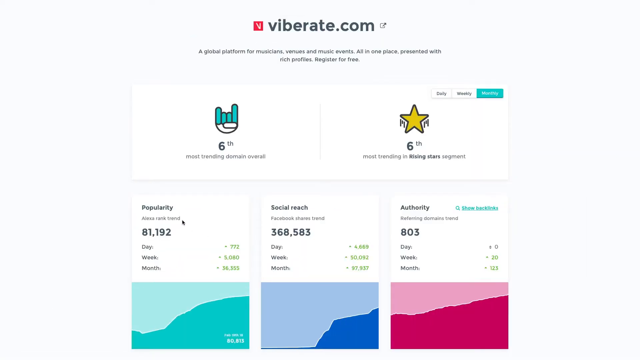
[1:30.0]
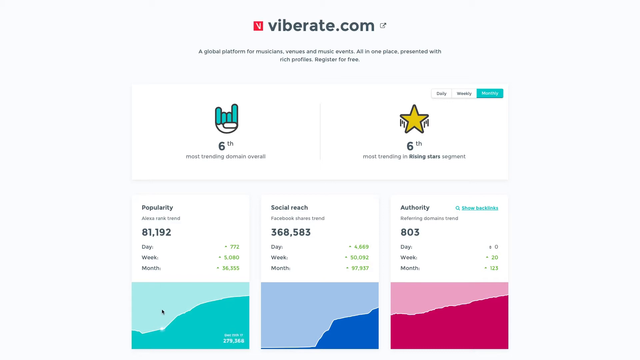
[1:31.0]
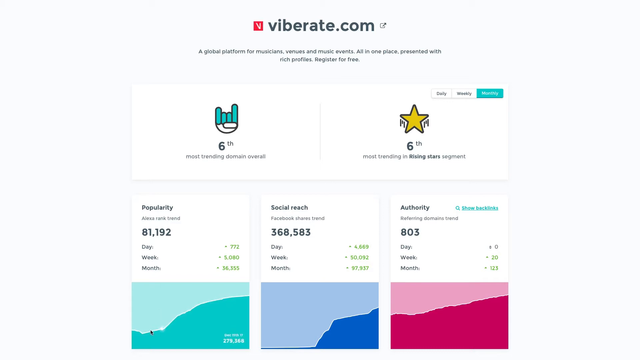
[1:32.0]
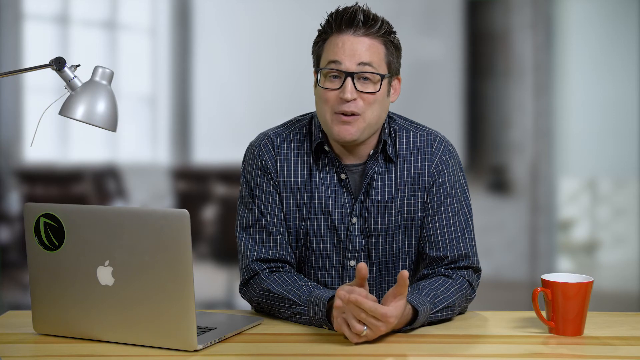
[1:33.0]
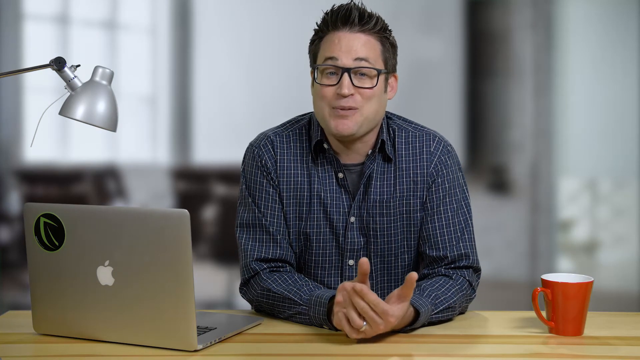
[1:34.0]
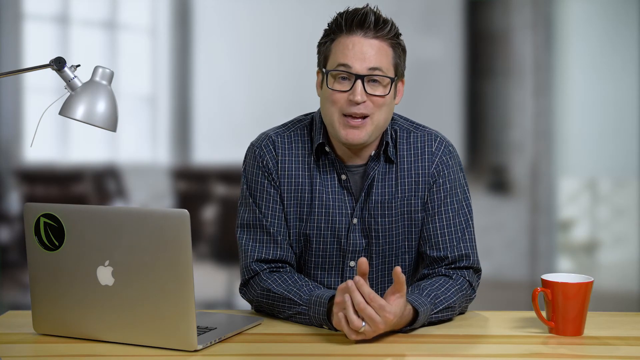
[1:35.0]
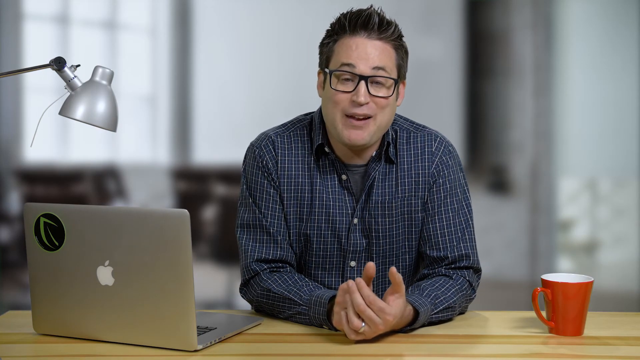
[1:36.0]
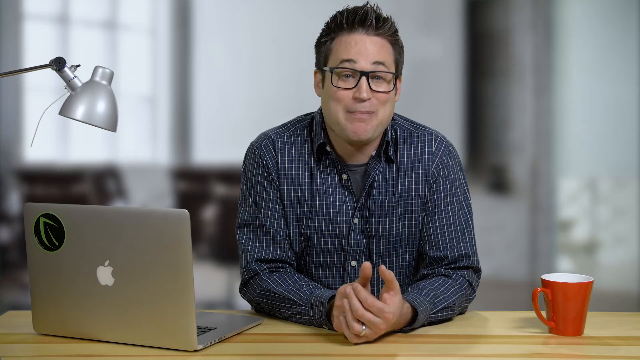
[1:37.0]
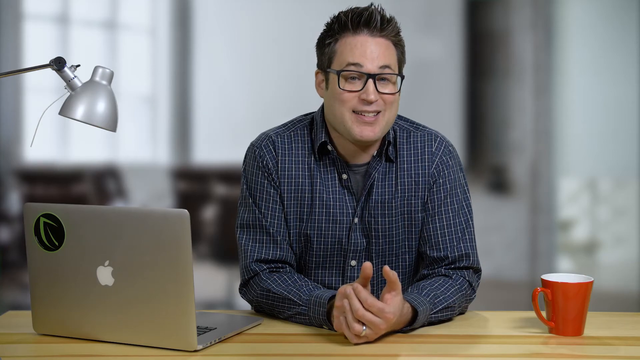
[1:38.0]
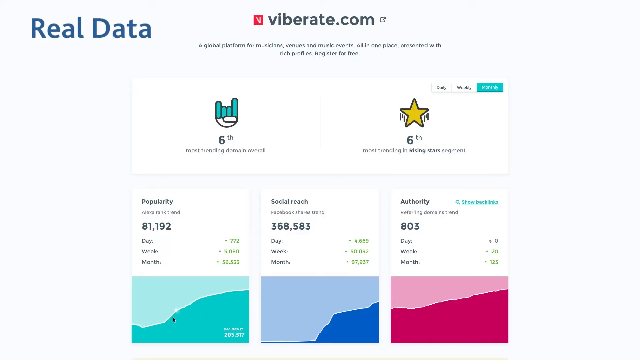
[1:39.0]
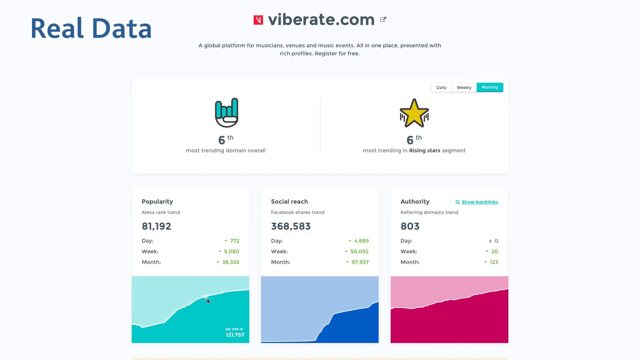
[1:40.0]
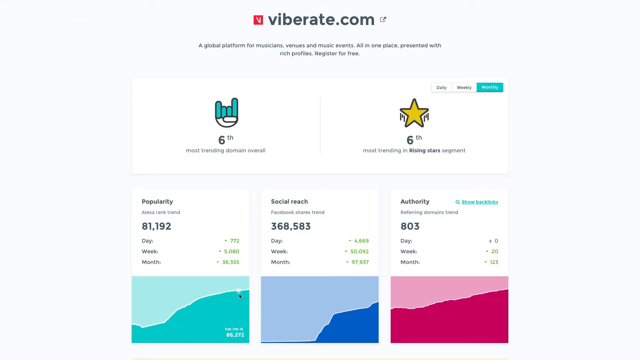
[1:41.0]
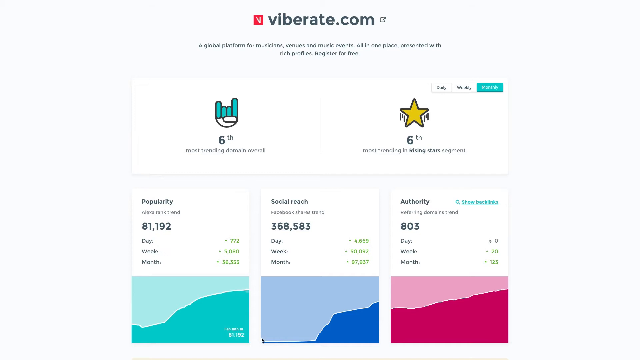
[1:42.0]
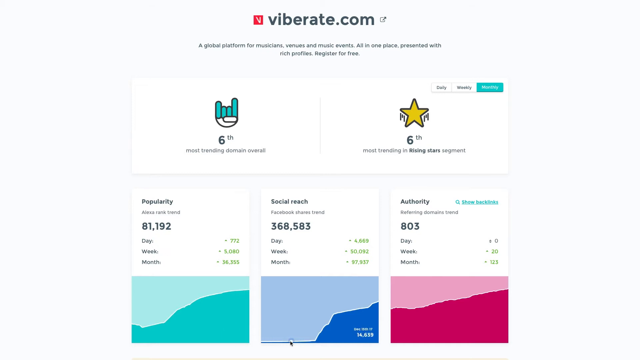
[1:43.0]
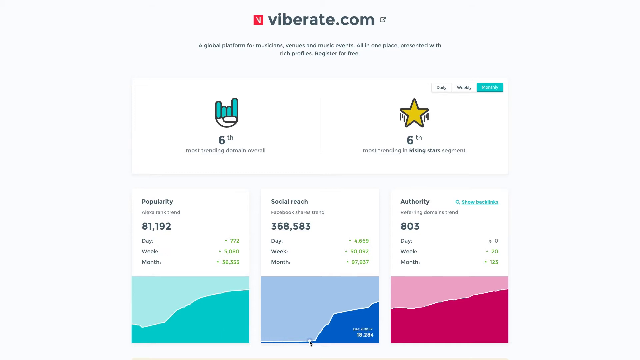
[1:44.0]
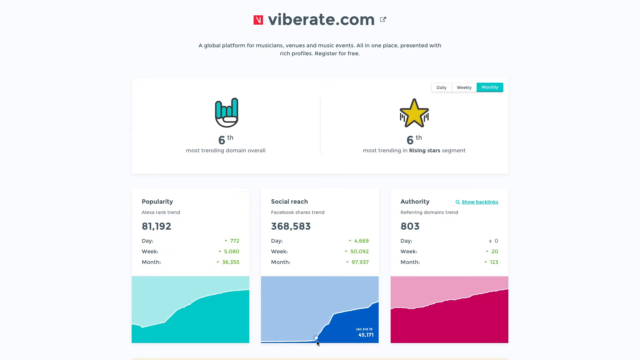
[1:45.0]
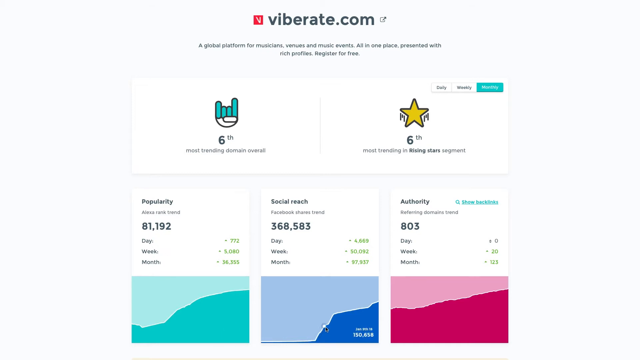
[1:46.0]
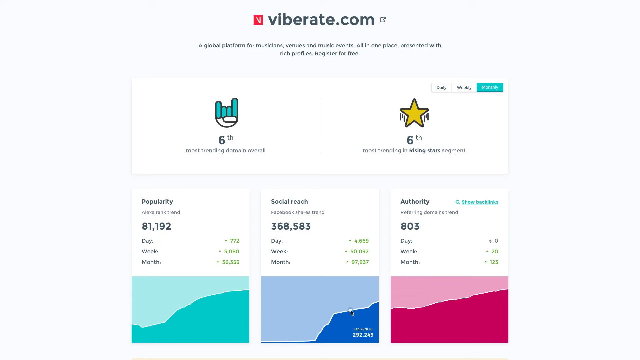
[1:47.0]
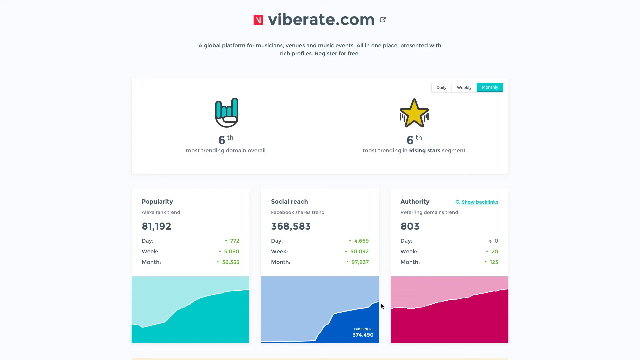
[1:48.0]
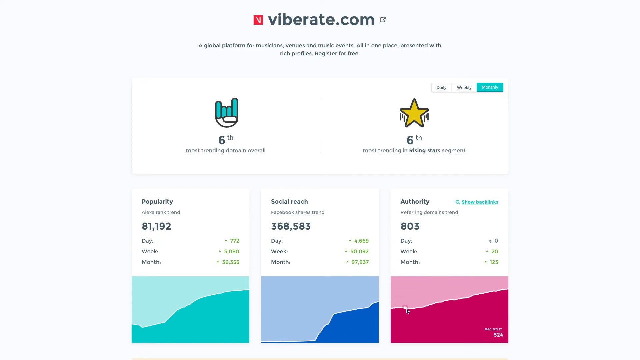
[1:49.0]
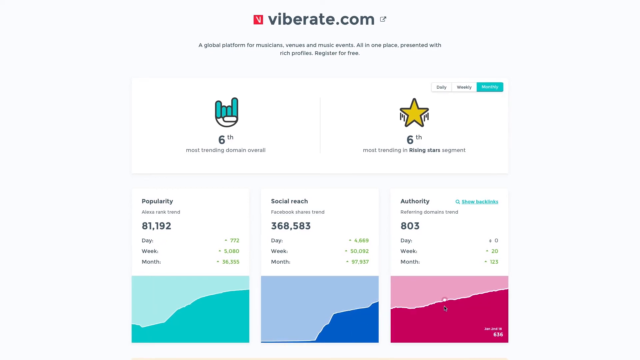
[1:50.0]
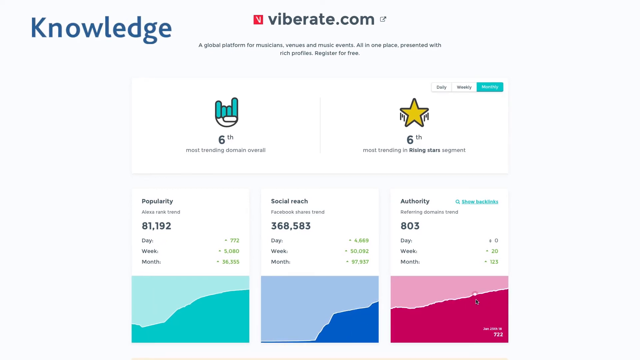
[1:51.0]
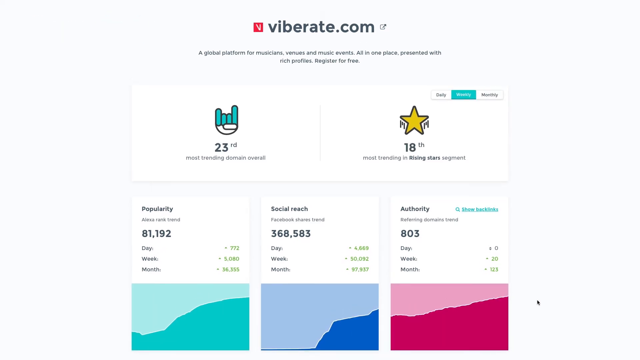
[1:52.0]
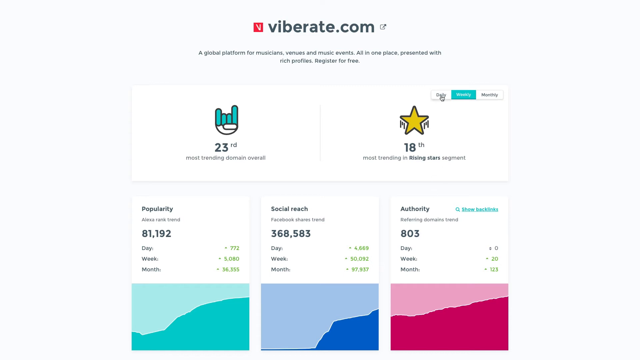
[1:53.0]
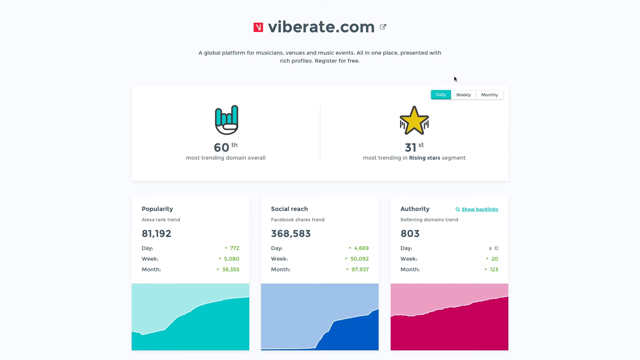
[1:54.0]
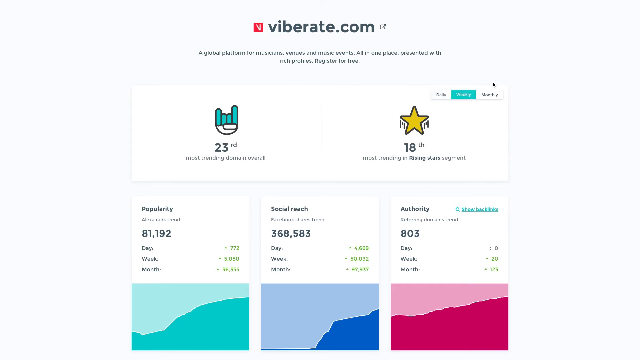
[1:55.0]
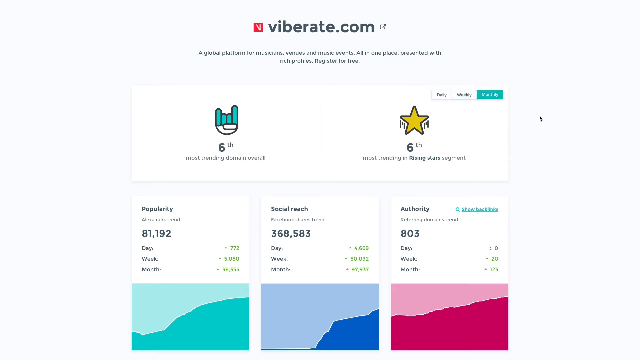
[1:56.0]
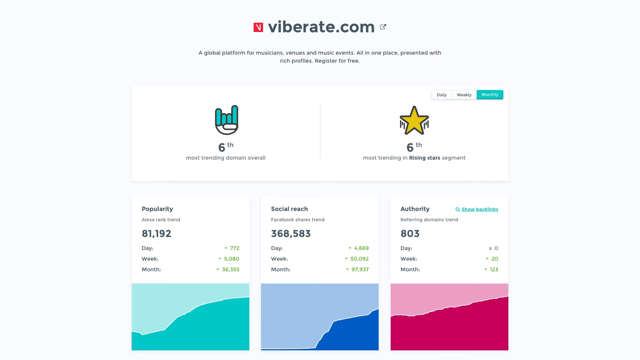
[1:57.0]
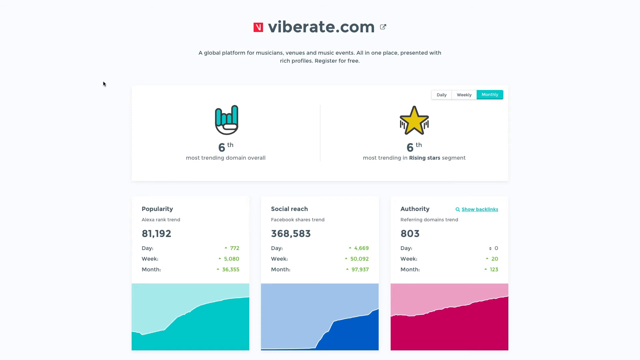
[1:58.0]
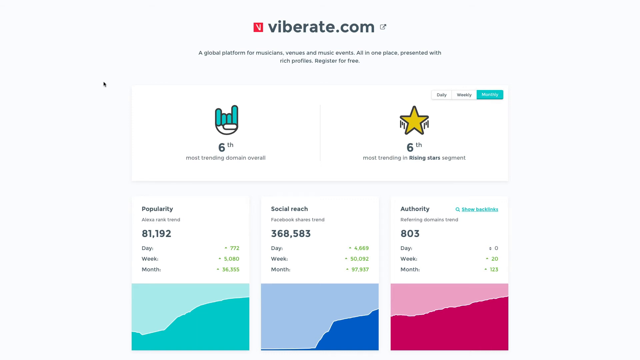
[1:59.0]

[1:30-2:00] The social trends for a website are shown, briefly displaying popularity numbers from Alexa ranks with daily, weekly and monthly growth, social reach from Facebook trends, and authority from domain trends. This website, called vibrate.com, ranks sixth overall, and a quick description says it is specifically for musicians, music events and venues, all in one place. The man is shown talking again, apparently summarizing the content of the site. Trend graphs are then displayed, showing sites trending upward, each of them interactable, along with daily, weekly and monthly stats. Inspiration text pops up, and the man is shown talking about the site once more. The site's sleek design presents data and statistics for each site, including popularity, social reach and authority, and a rising star segment is one of the segments listed.